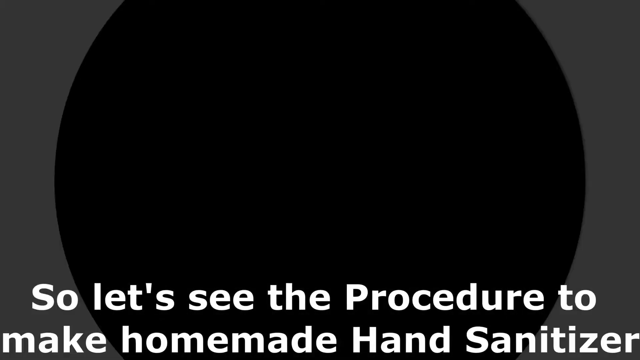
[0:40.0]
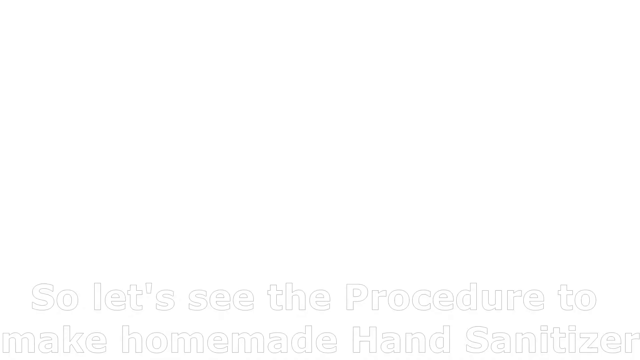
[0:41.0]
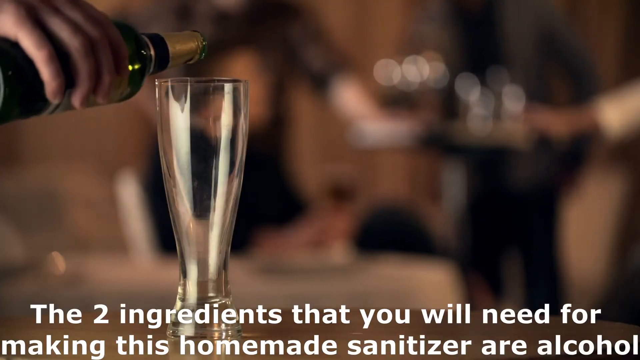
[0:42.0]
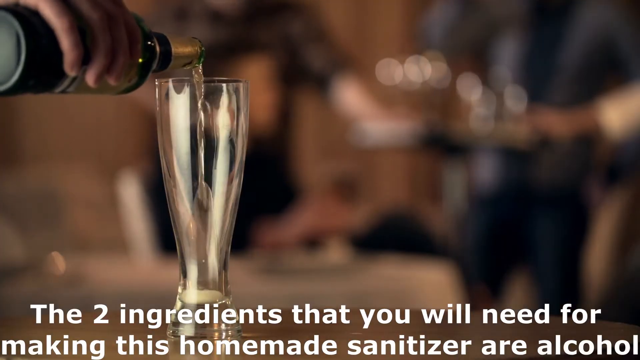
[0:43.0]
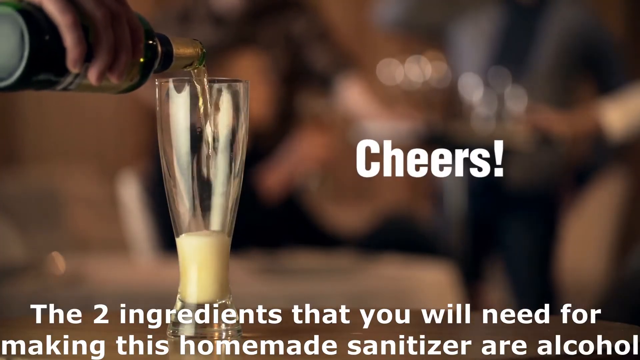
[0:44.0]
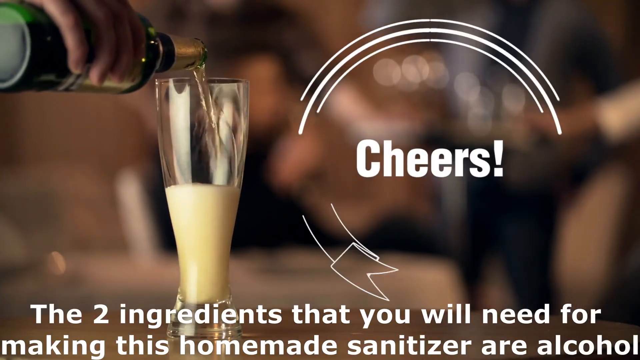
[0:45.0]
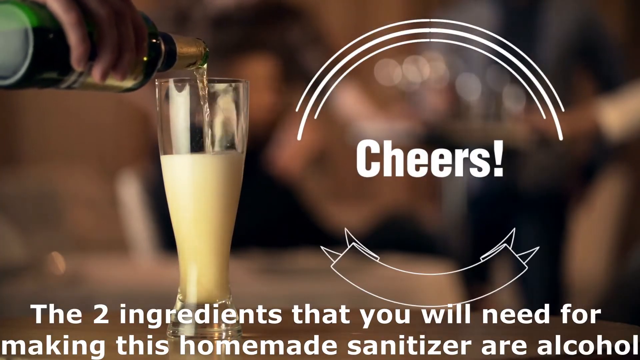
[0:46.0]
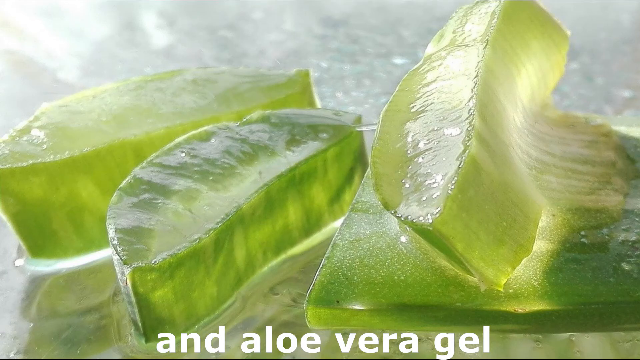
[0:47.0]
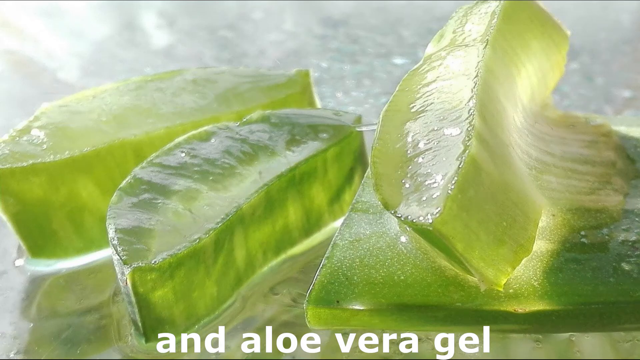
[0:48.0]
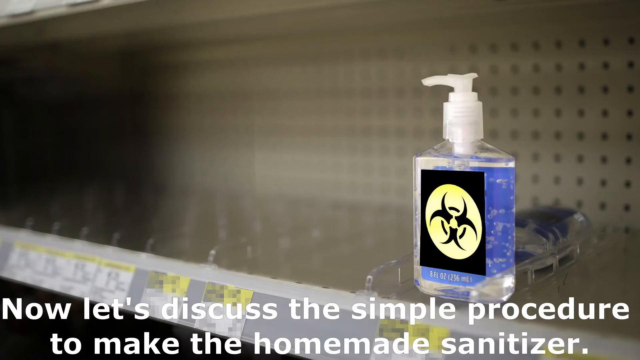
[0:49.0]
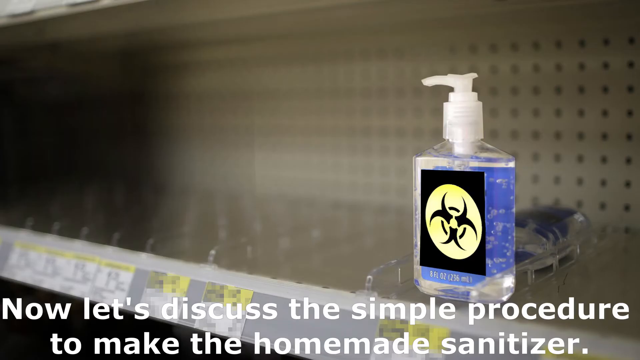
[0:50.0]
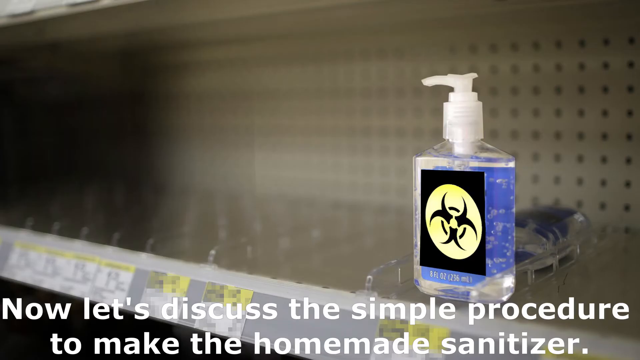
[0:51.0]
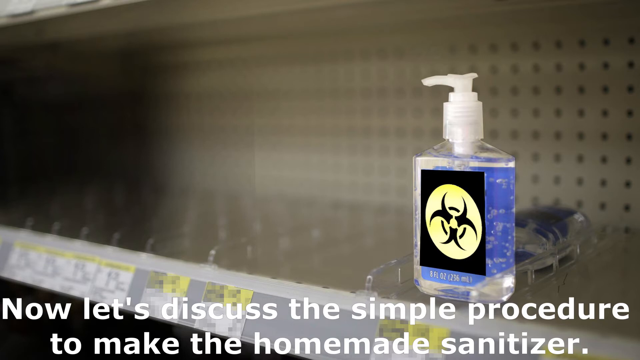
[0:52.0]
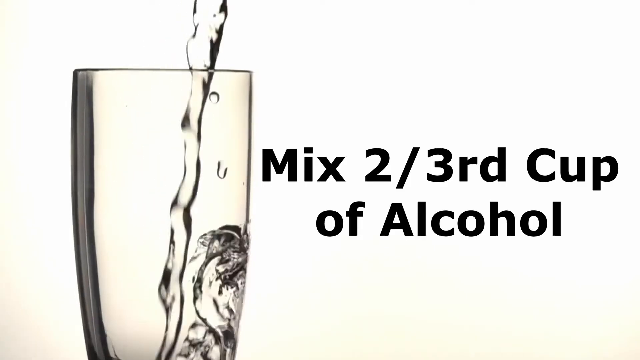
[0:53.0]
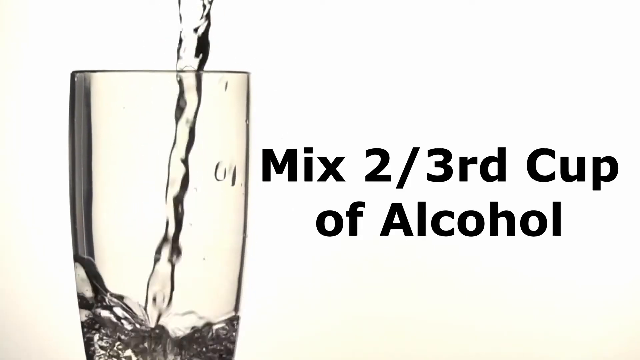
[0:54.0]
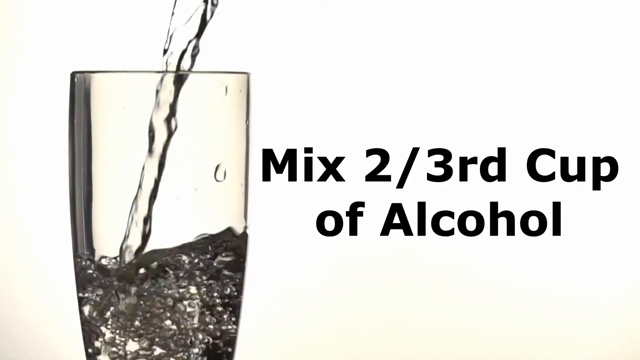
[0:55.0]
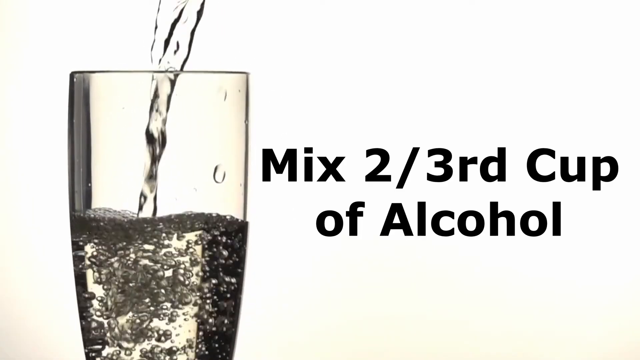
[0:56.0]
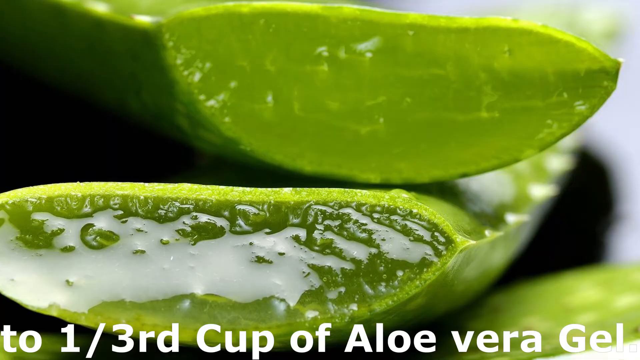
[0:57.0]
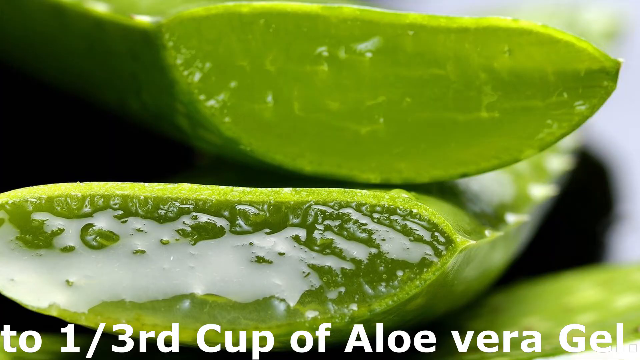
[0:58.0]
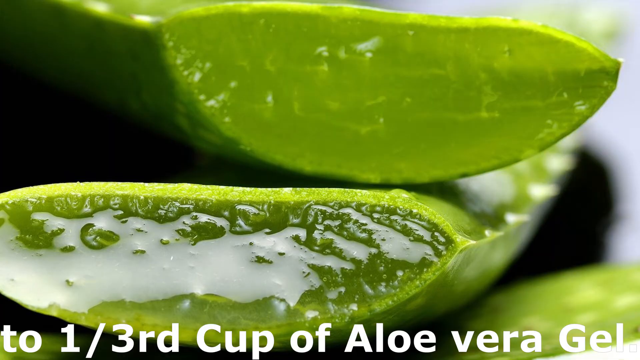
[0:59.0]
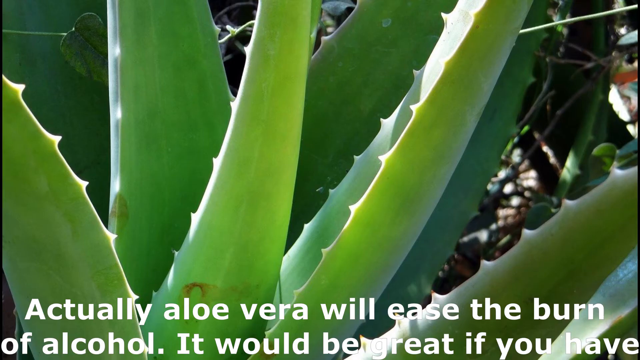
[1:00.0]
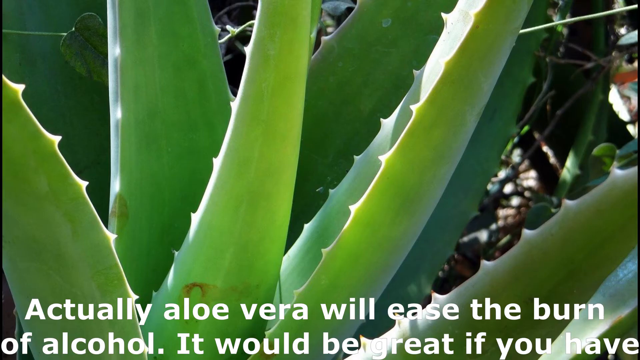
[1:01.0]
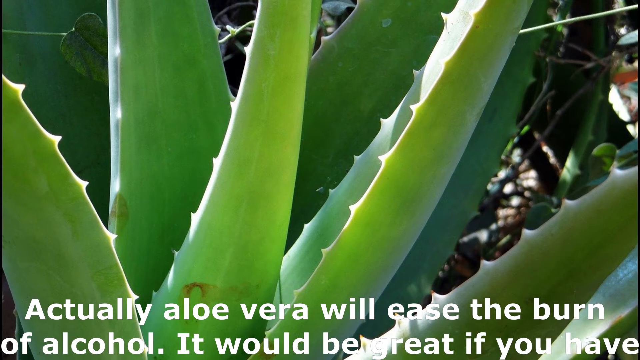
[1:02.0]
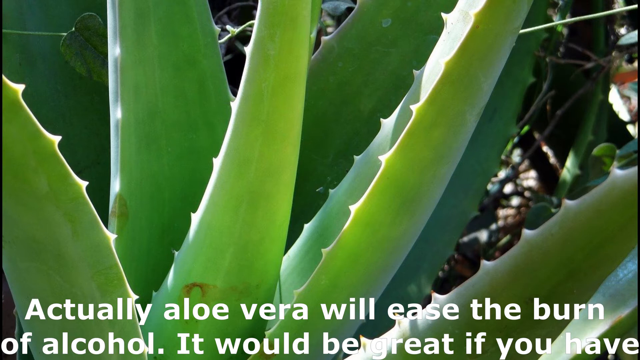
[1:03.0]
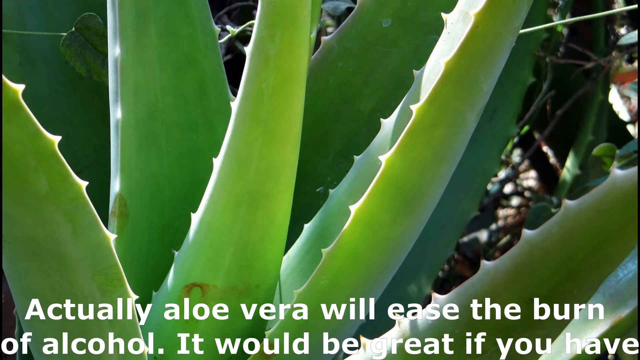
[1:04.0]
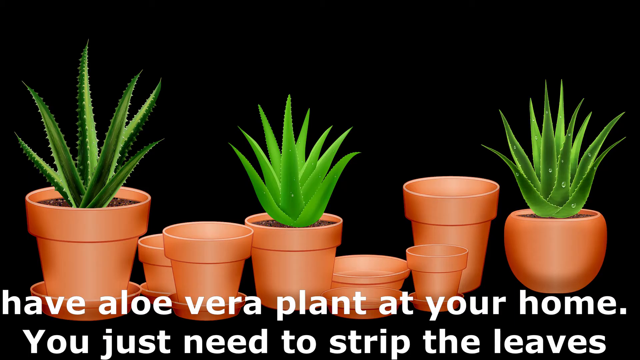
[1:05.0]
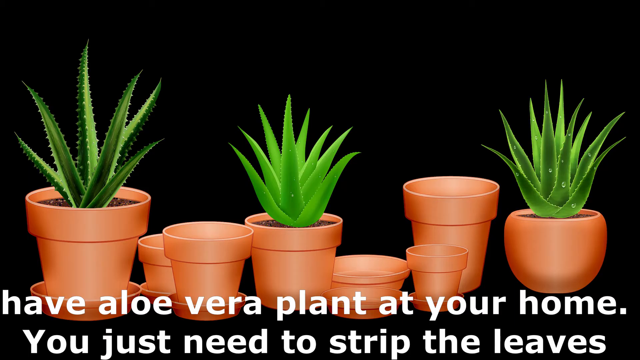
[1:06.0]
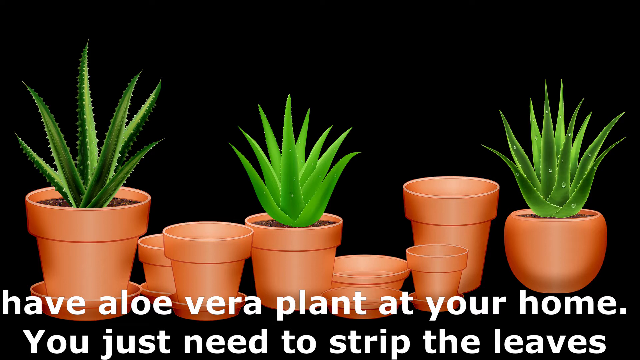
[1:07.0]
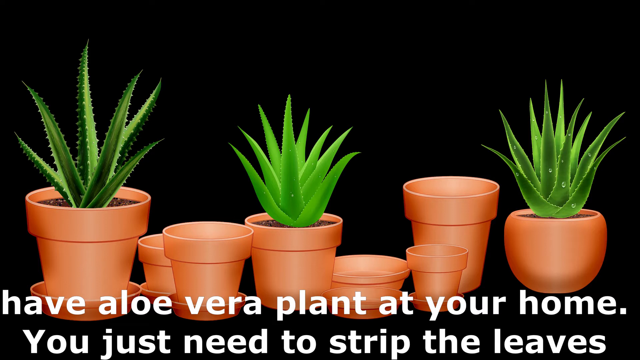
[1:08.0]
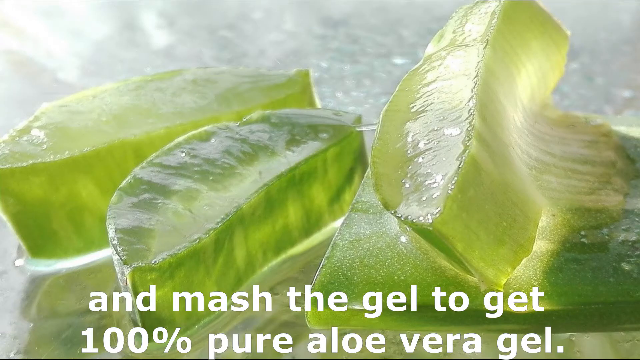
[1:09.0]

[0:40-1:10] A hand holds a beer and pours it into a cup; the cup fills from the bottom and the beer forms foam as it fills. The bottle is green and contains a goldish liquid. On the far right of the screen the text "cheers!" appears, and text at the bottom continues, stating that the two ingredients needed for making this homemade sanitizer are alcohol. Next comes something green that looks like a vegetable, then a bottle that is mostly transparent, with a black sign with a circular border and some signs inside it at its center, a blue background behind it, and transparent liquid inside. Text at the bottom reads "now let's discuss this simple procedure to make homemade." The text then says first to "mix 2/3 cup of alcohol" and second to "add aloe vera."